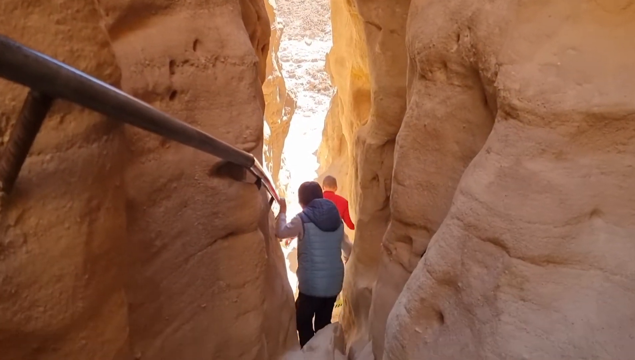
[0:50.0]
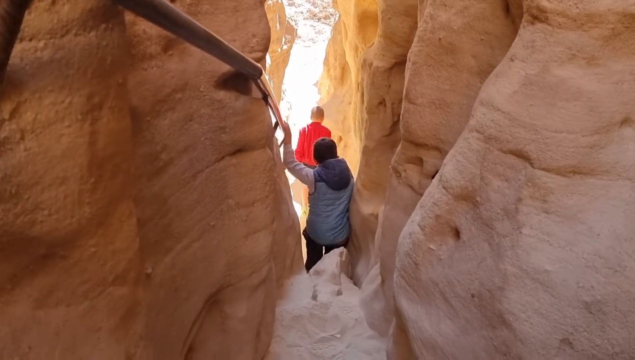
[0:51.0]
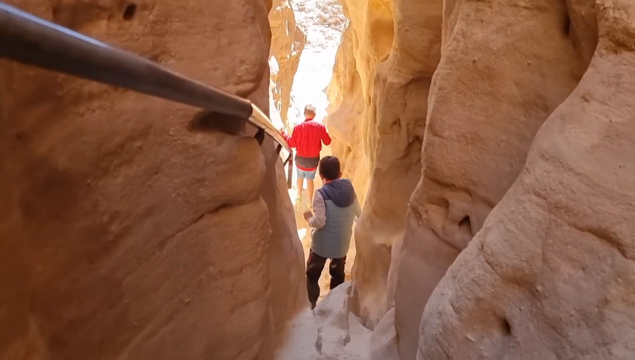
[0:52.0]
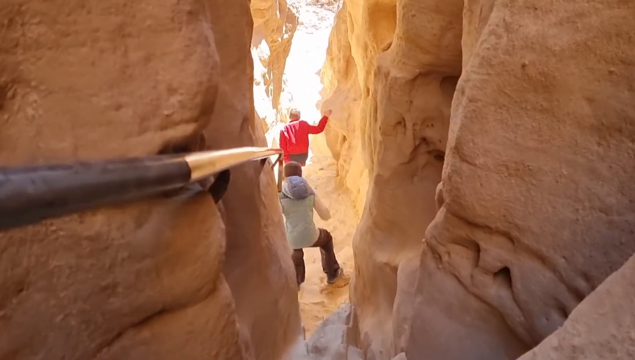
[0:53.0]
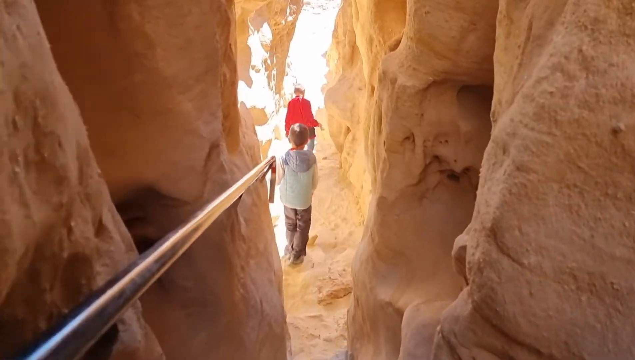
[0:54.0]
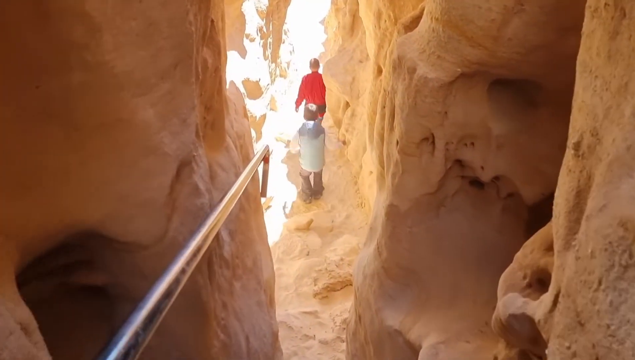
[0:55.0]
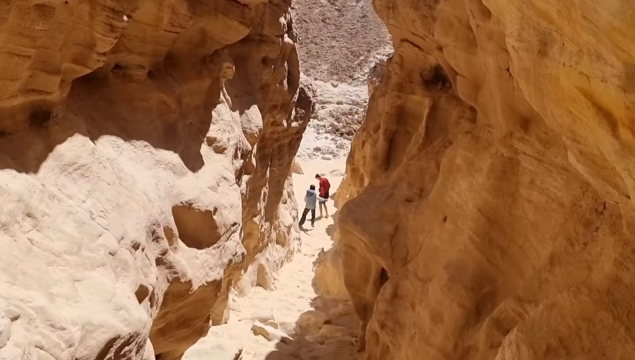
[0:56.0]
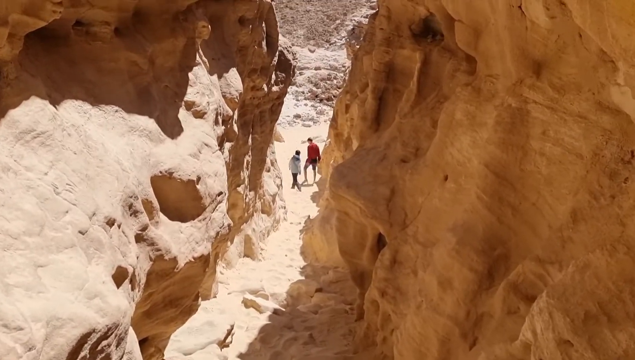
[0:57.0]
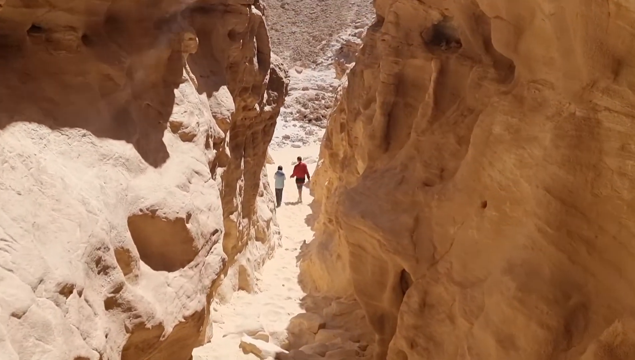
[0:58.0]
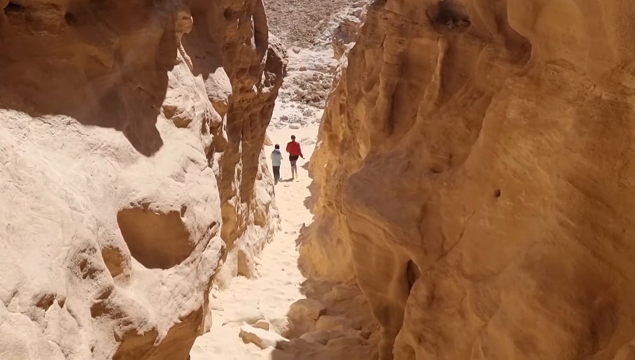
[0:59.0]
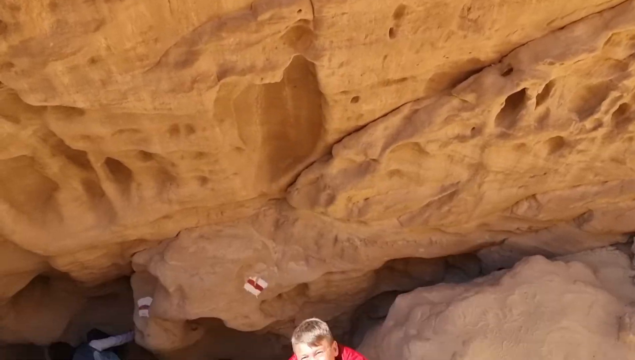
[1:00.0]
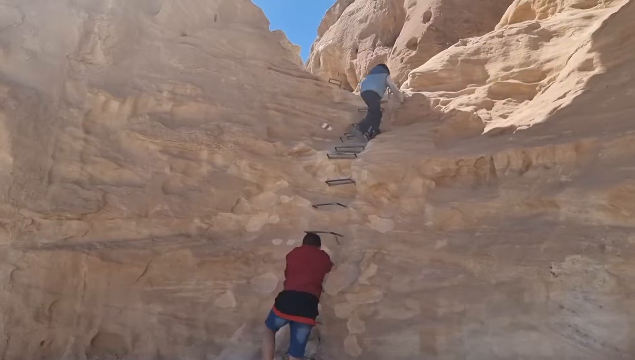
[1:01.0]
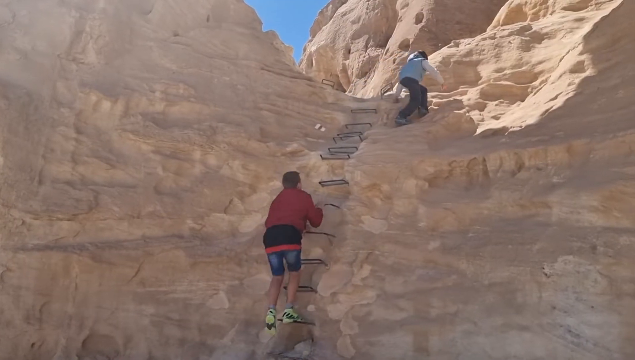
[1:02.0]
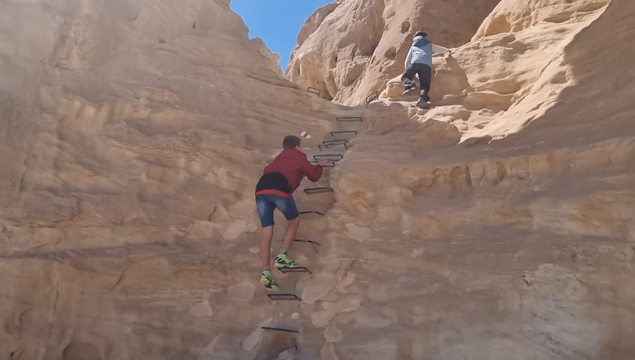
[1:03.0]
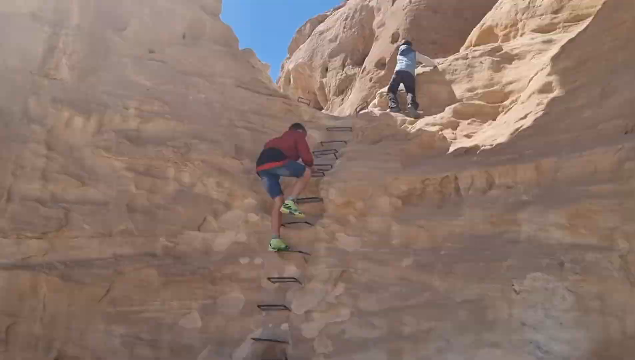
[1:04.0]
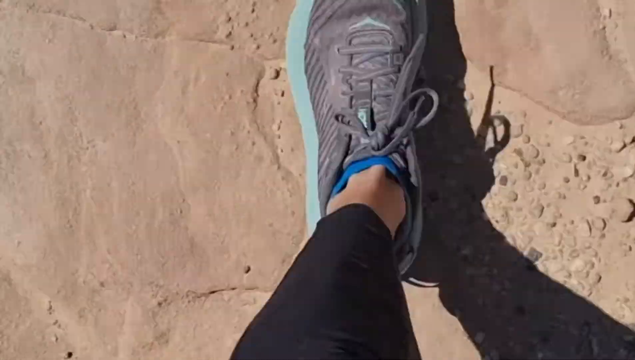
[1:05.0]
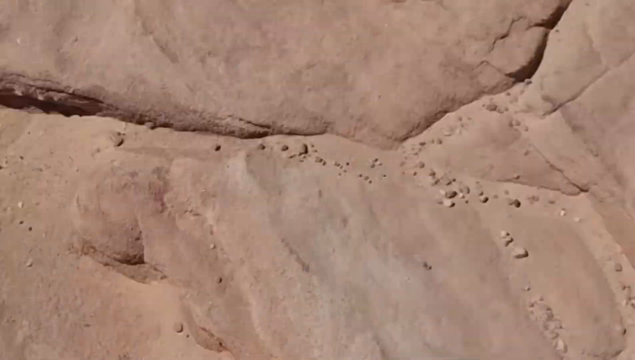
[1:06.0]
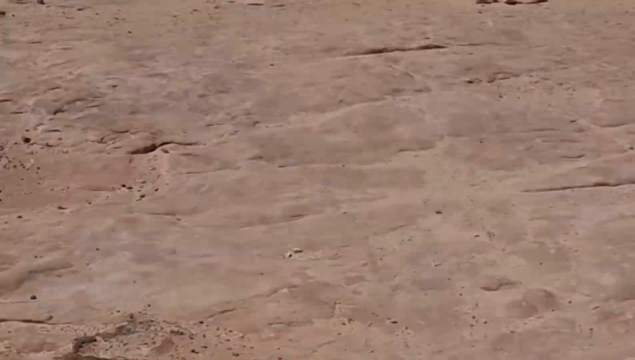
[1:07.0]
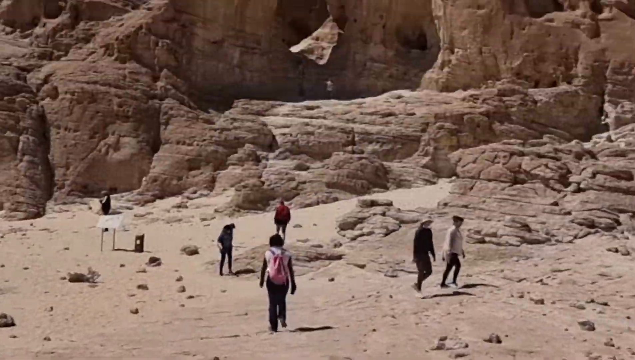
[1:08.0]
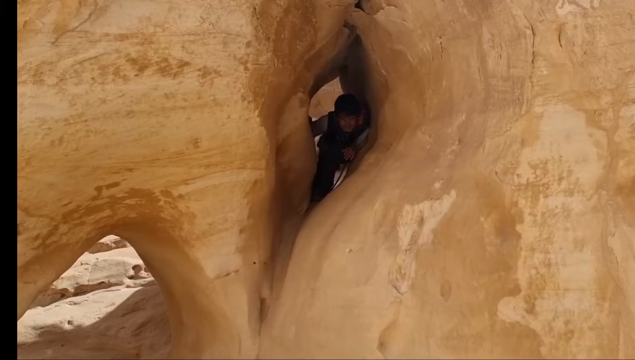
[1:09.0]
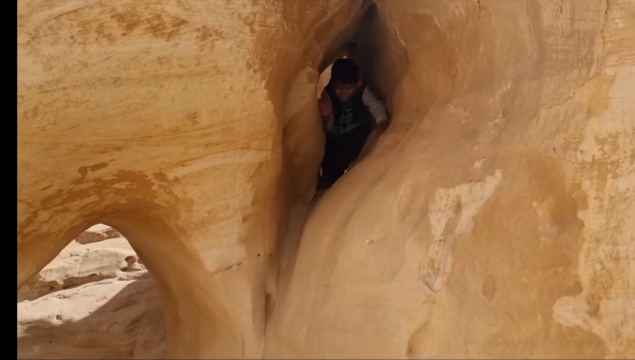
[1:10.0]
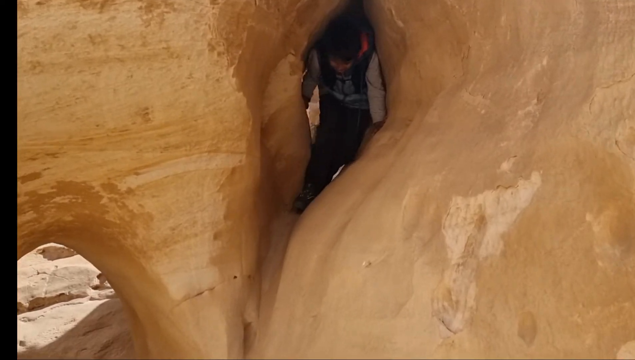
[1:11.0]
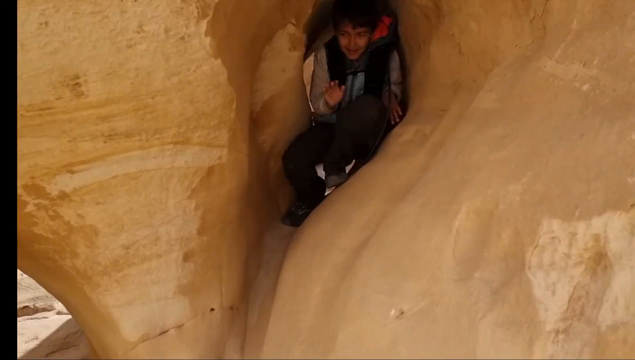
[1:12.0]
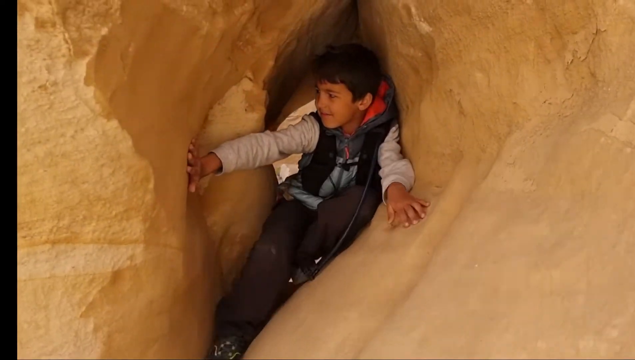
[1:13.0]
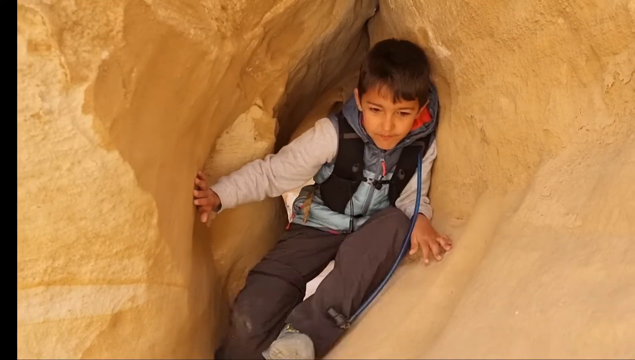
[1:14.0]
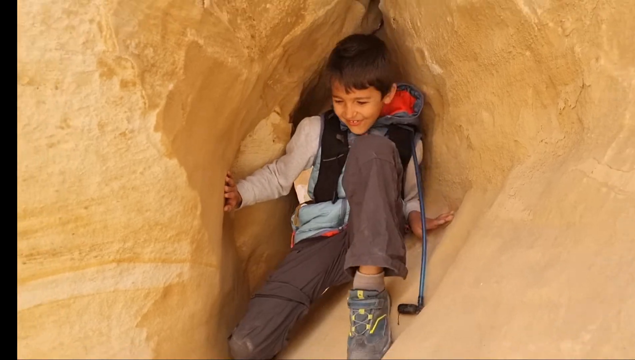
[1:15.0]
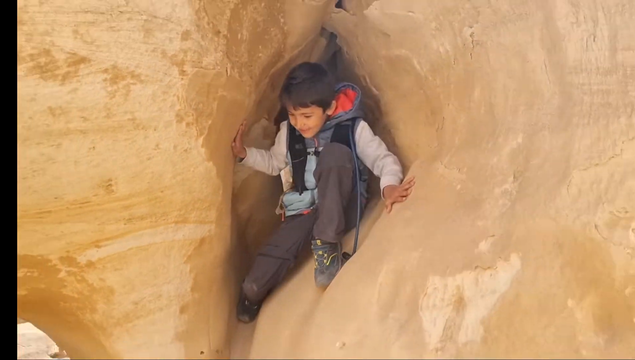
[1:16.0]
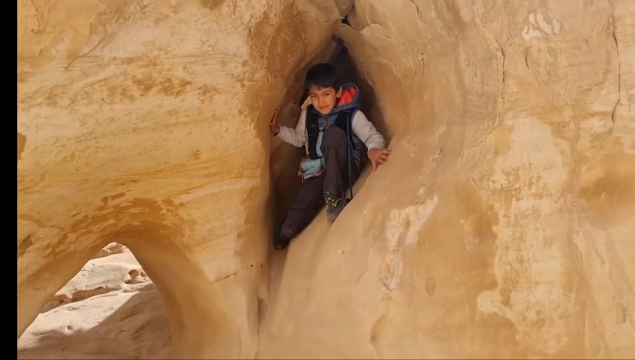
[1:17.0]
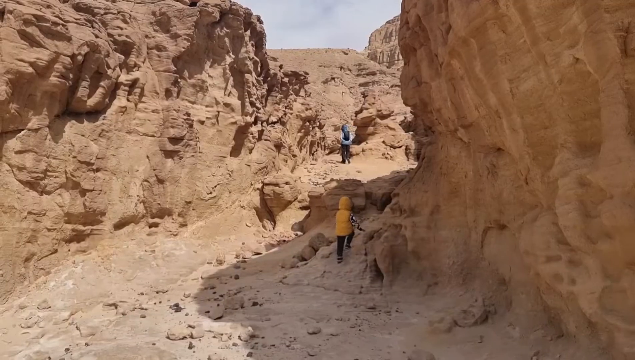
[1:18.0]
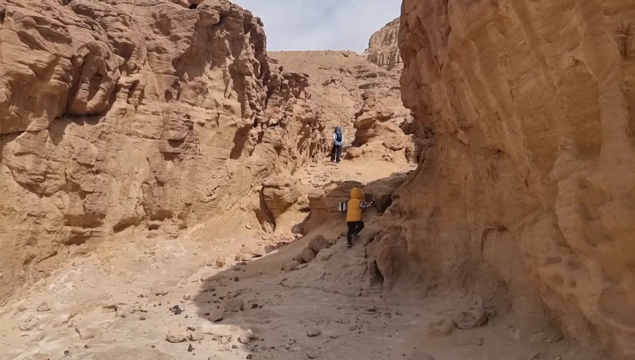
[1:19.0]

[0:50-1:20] Outdoors in what looks to be a desert landscape, apparently a park, there are hand railings and metal stairs set in the rocks. The rocks are very smooth and wavy, brown, orange and reddish. Elementary school-age children play, jumping, touching and exploring the rocks, hanging on to the railings, which are metal painted black, and climbing up the stairs. The ground is very smooth, with many rocks and pebbles that tend to be flat and darker in color. At one point one of the kids smiles while squeezing through a very narrow tunnel in the rock formation, playing inside the structure. The person filming occasionally shows their face; it looks to be a woman, presumably the child's mother.